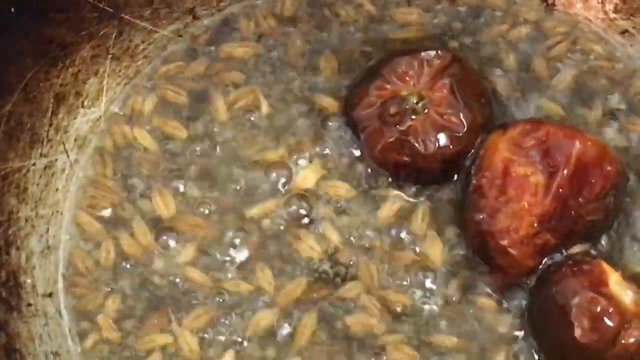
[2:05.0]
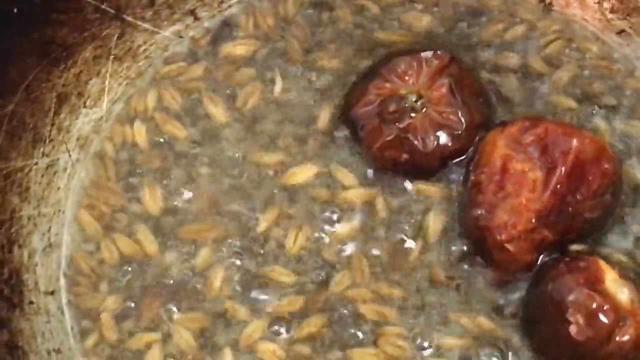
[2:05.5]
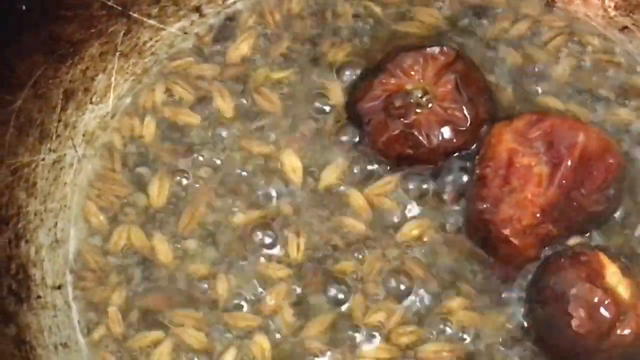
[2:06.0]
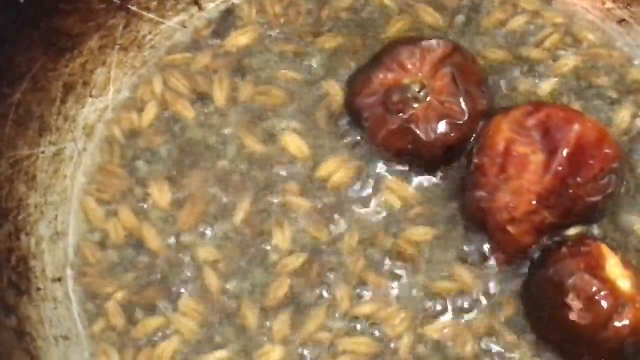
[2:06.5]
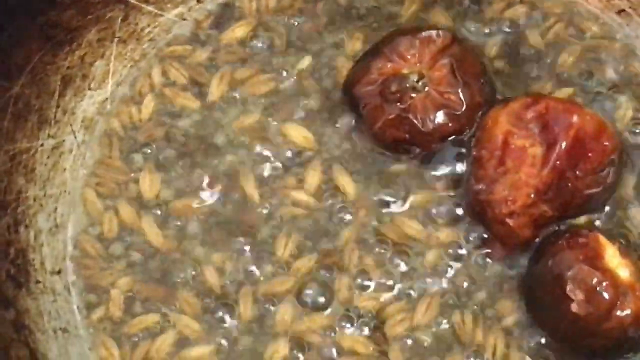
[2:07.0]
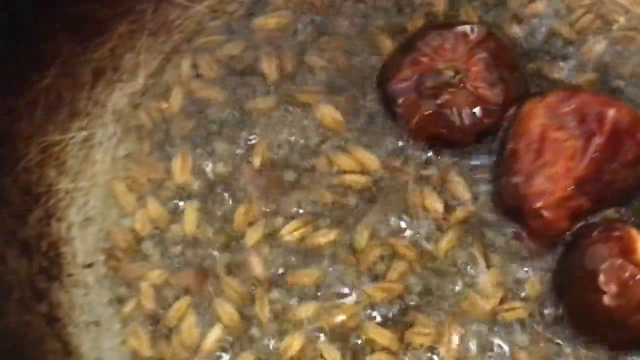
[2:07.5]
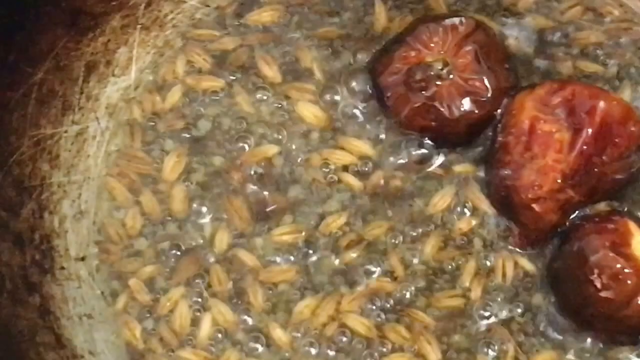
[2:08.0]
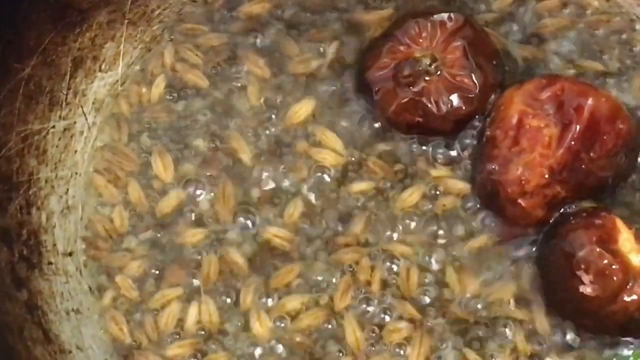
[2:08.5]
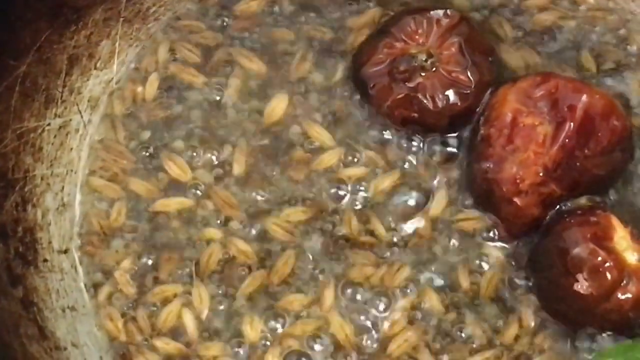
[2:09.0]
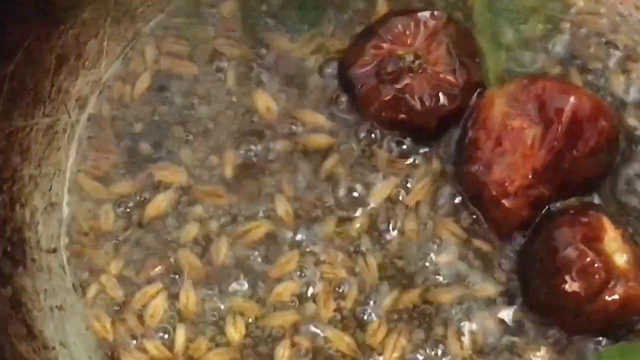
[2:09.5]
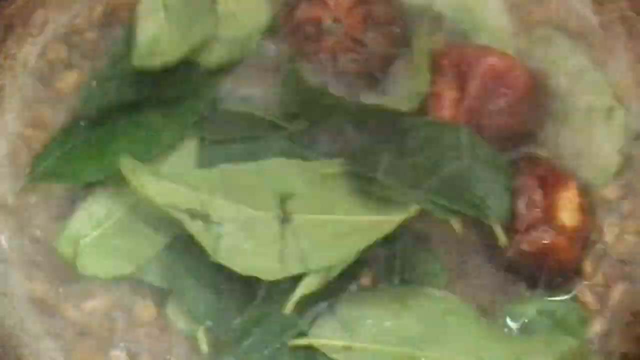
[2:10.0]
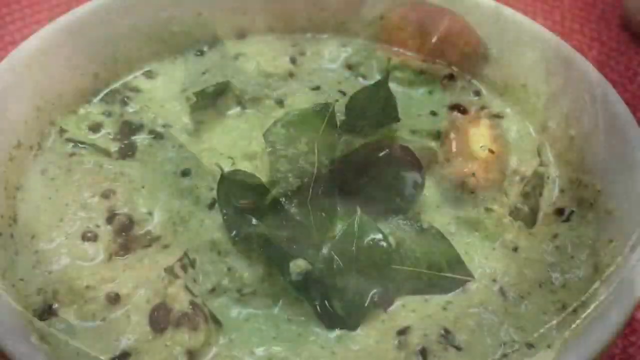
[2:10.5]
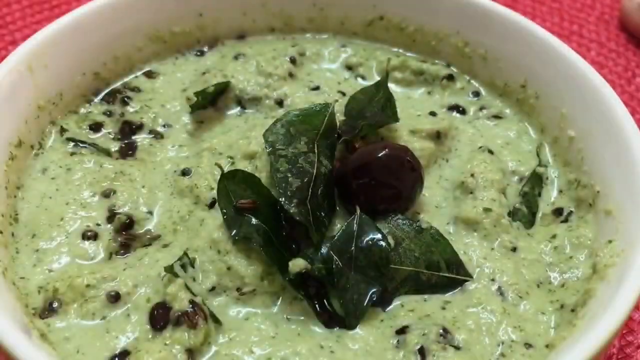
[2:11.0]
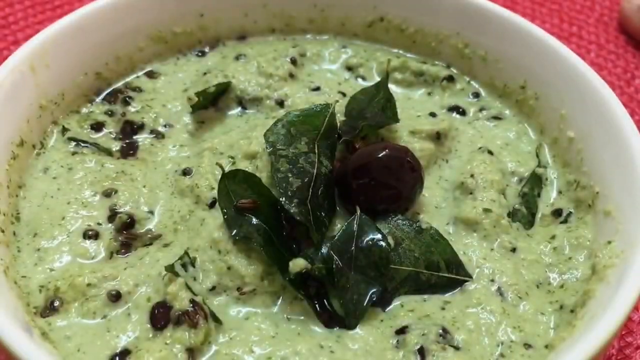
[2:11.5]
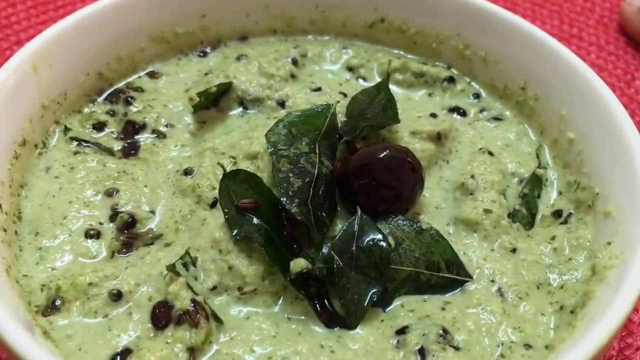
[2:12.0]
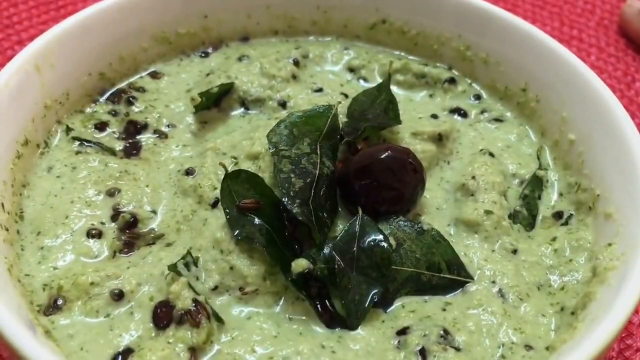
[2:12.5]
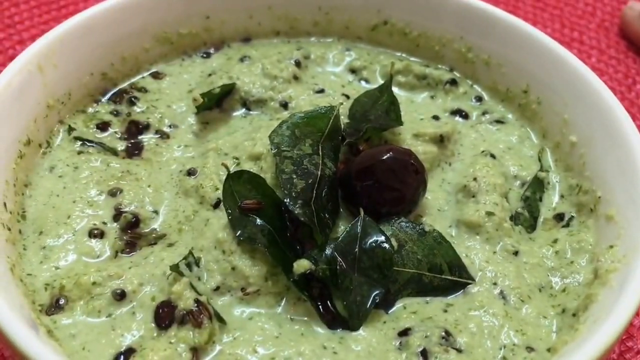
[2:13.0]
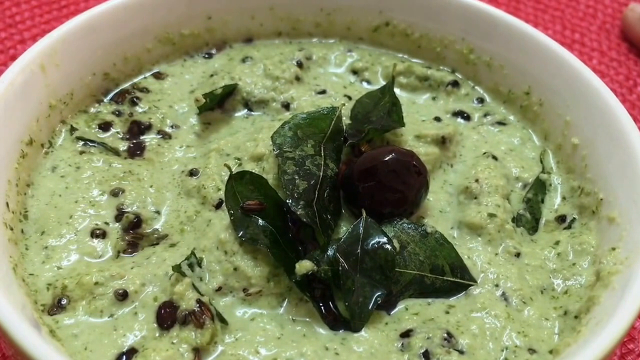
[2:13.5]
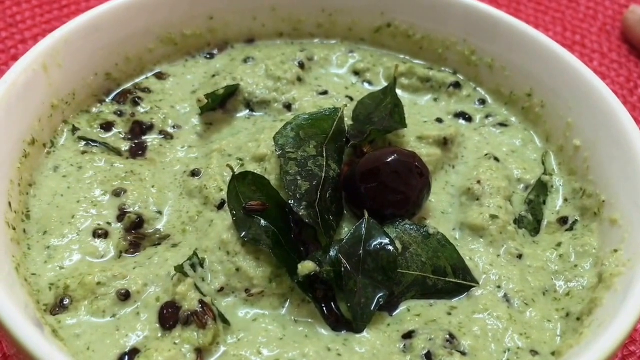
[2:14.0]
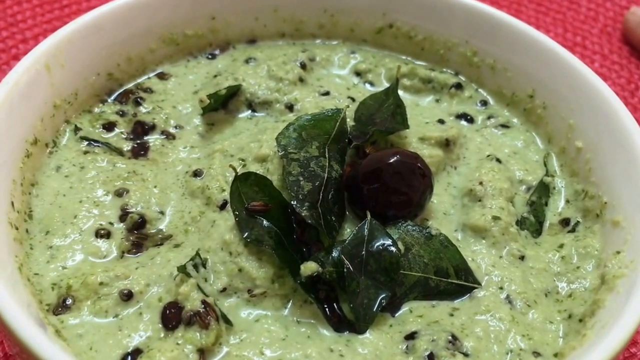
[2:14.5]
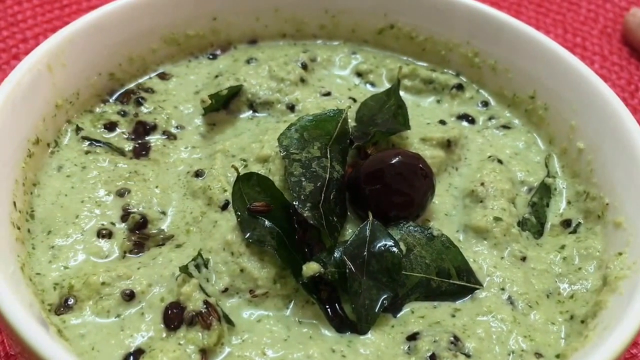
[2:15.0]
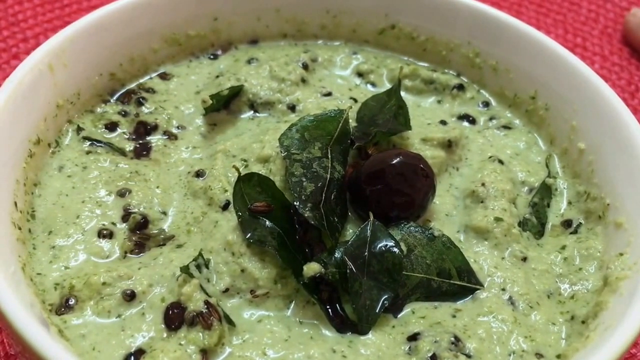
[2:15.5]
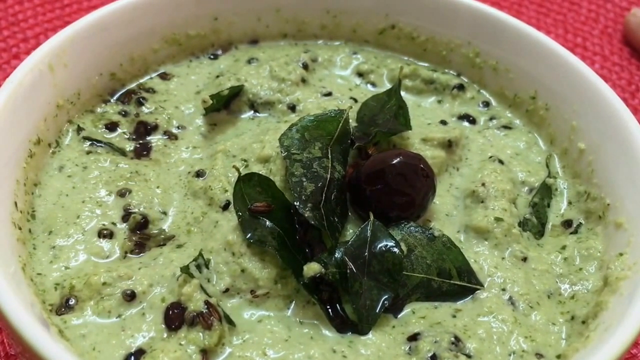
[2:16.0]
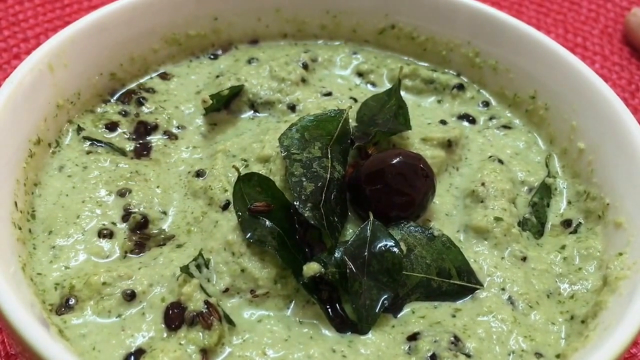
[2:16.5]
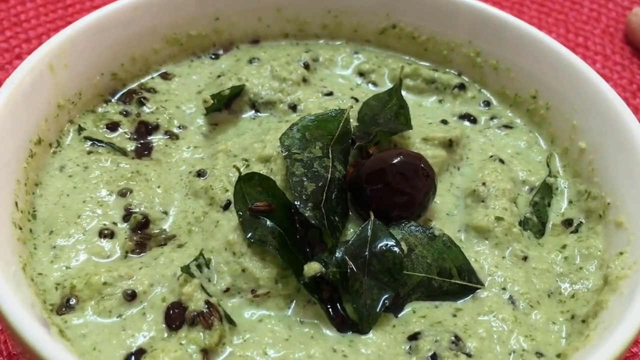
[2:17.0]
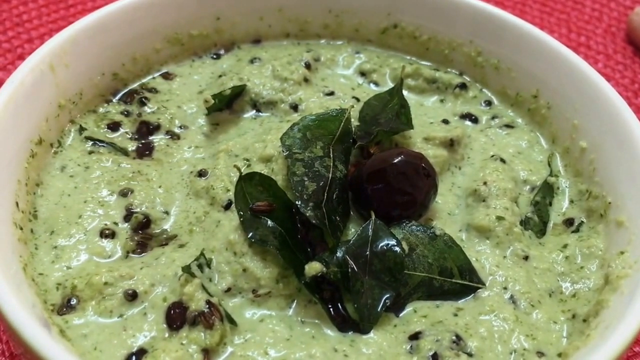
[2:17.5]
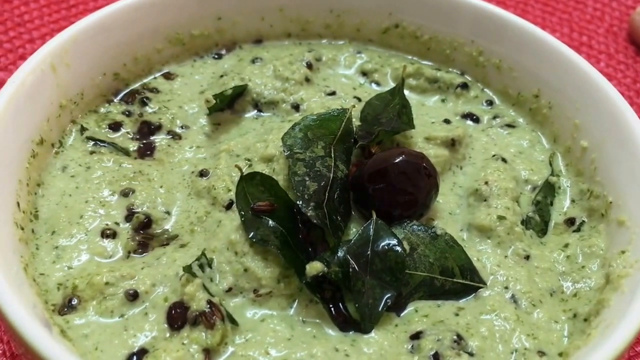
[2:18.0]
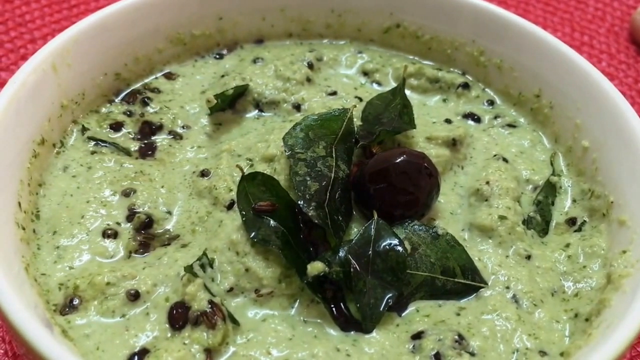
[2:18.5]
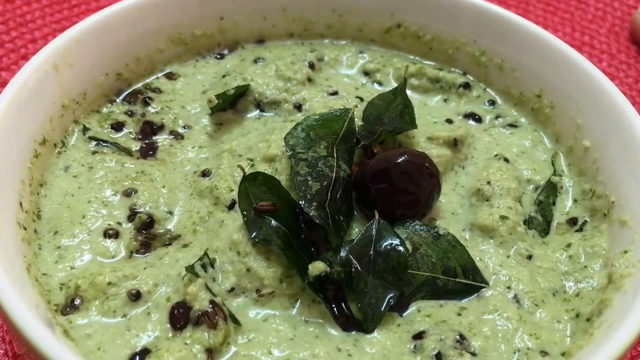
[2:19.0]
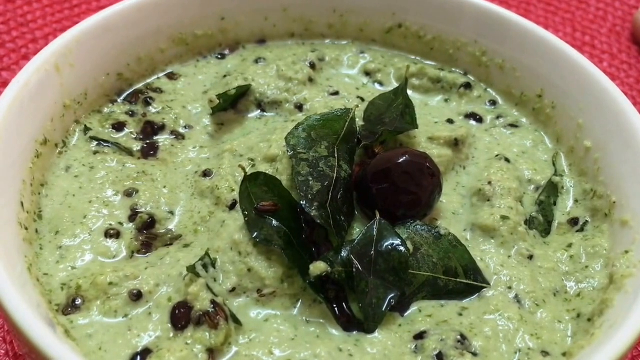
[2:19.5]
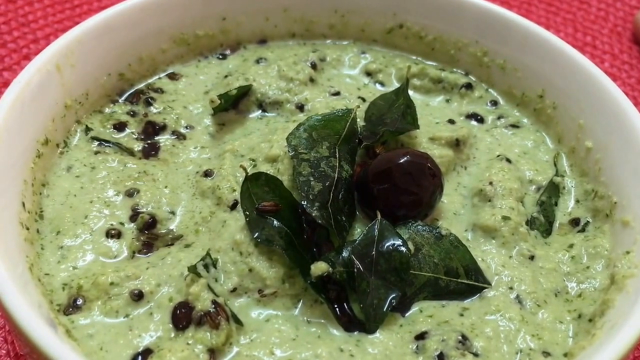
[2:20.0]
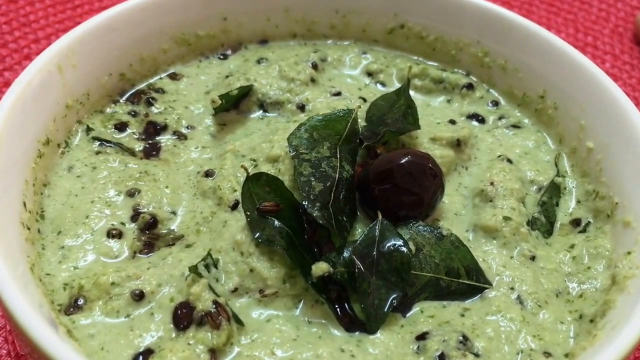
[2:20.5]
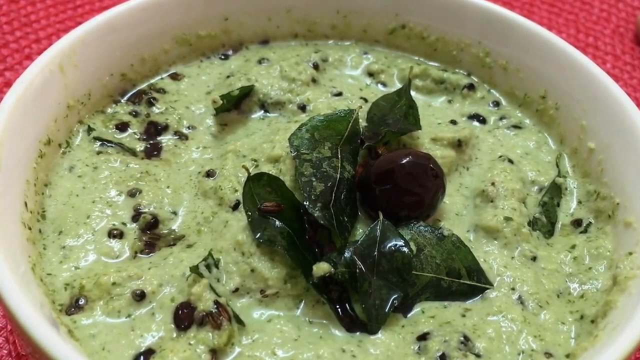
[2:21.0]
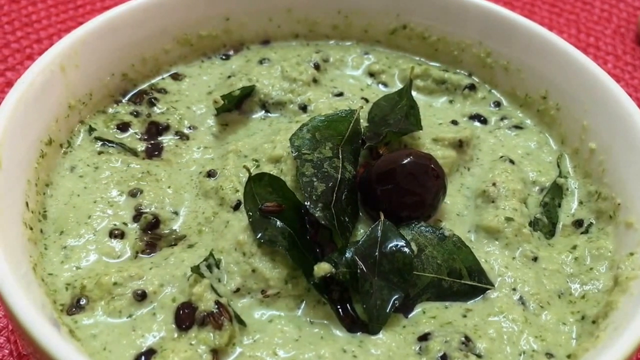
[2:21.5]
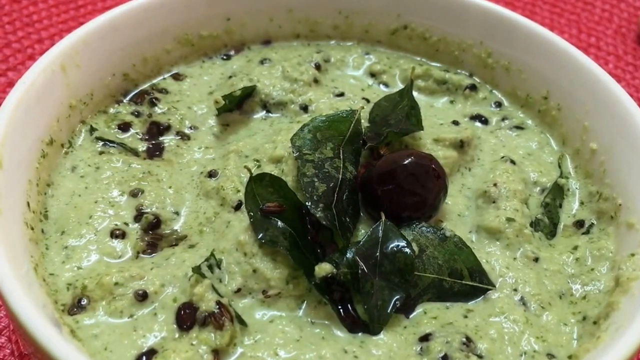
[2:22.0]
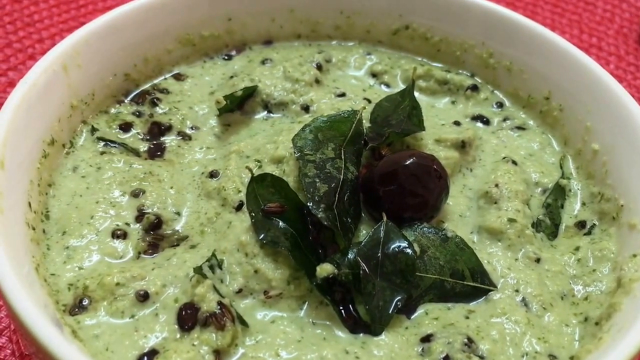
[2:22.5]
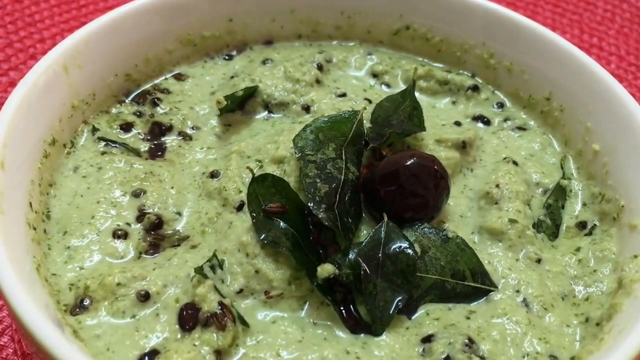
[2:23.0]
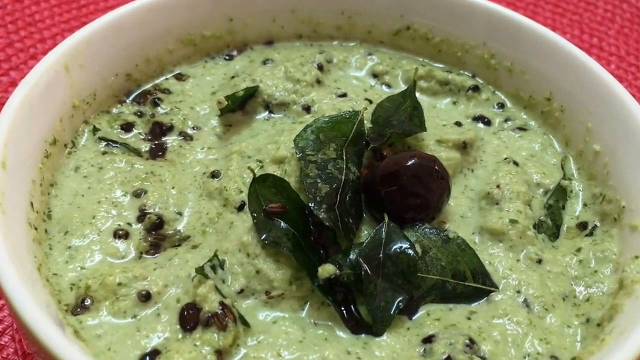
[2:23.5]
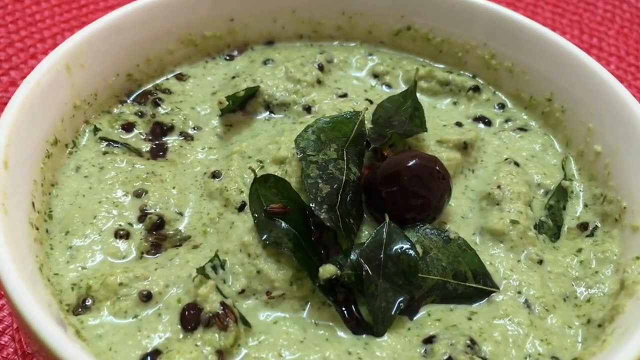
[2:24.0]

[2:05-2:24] The finished chutney is shown, apparently garnished with an olive and some sort of curry leaves or something similar on top. It has a chunky consistency and a pale green color, and looks fresh.